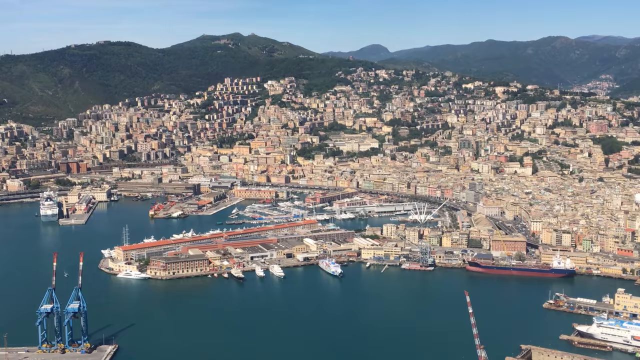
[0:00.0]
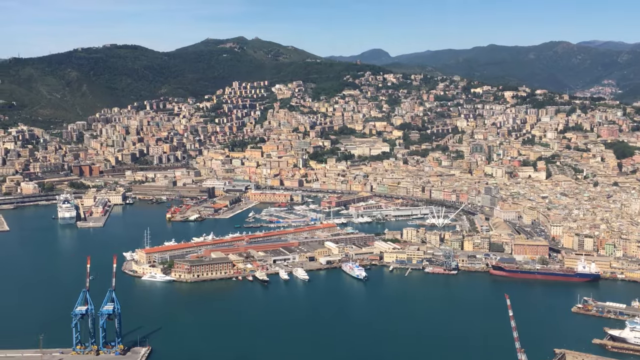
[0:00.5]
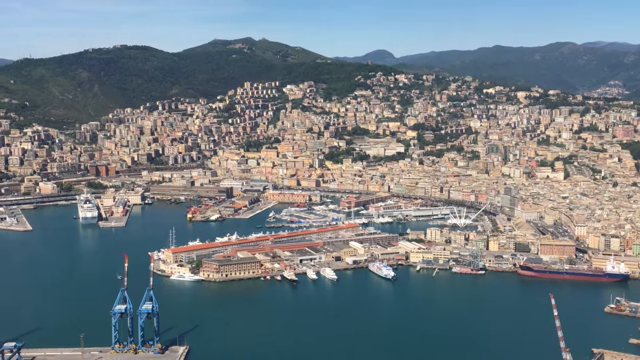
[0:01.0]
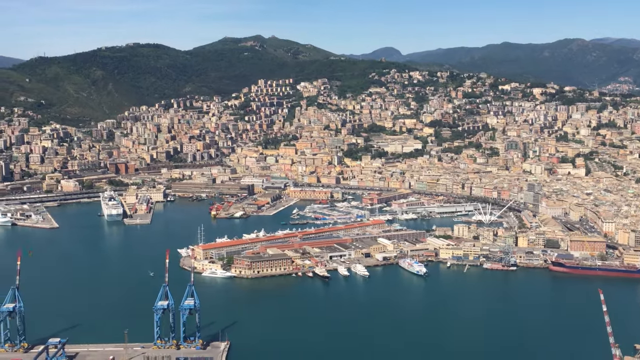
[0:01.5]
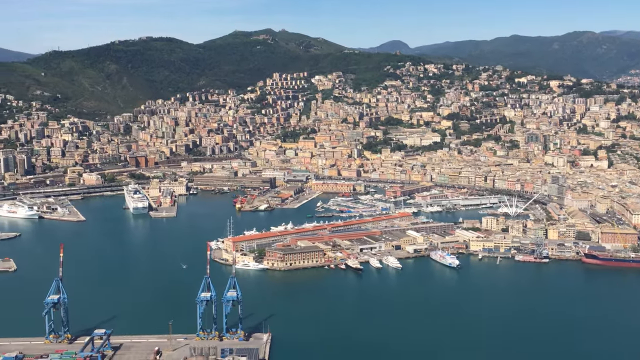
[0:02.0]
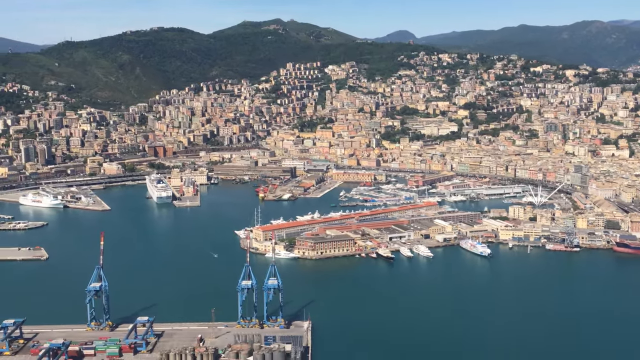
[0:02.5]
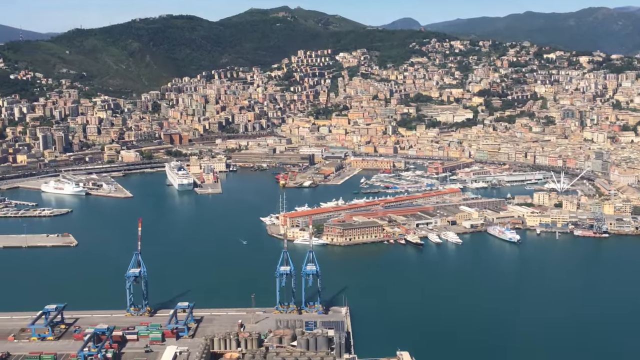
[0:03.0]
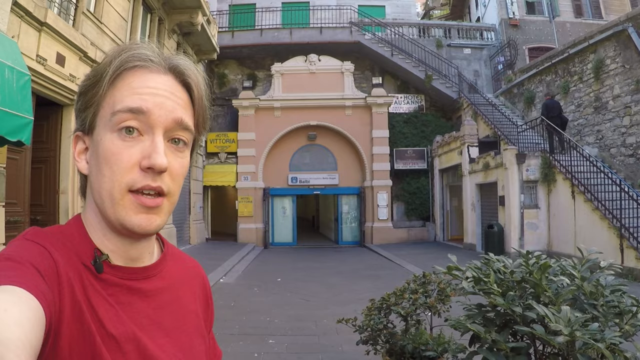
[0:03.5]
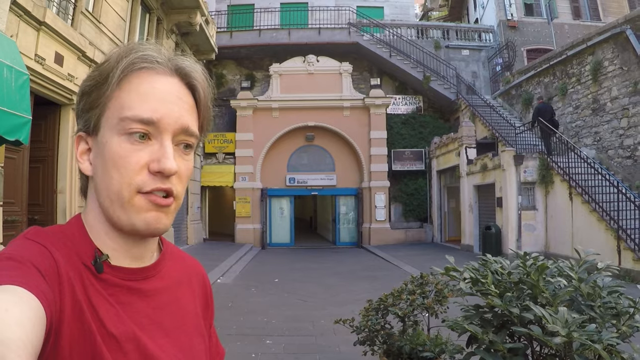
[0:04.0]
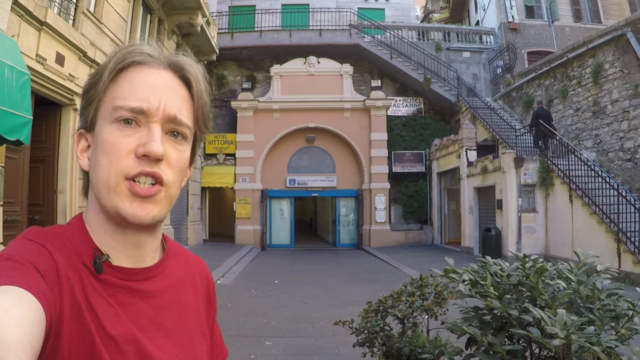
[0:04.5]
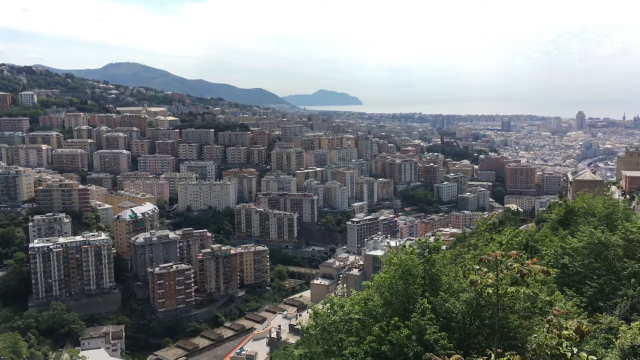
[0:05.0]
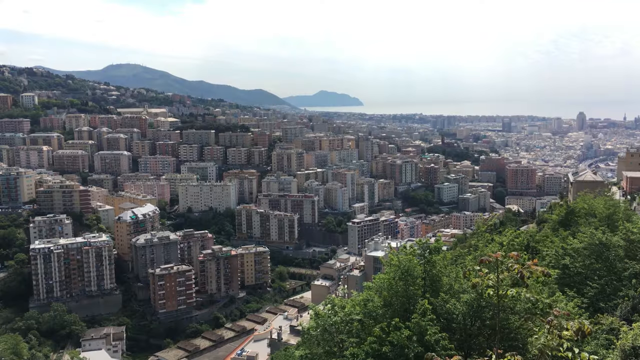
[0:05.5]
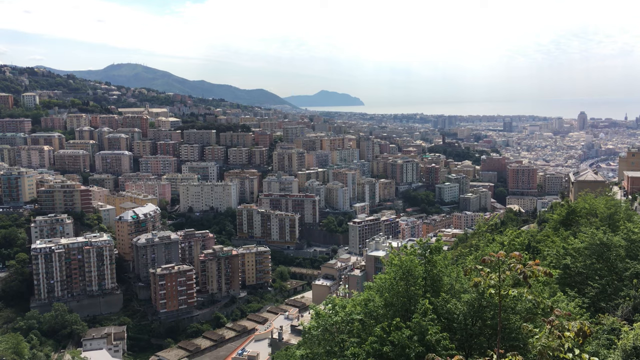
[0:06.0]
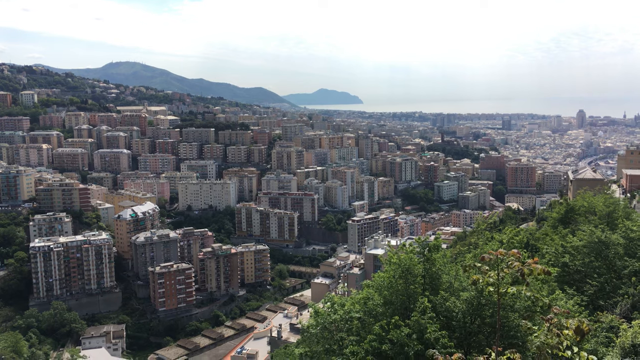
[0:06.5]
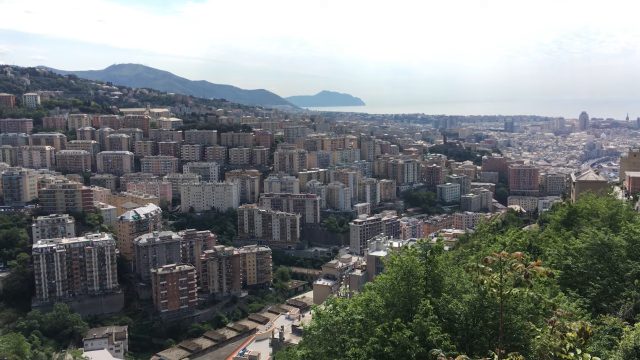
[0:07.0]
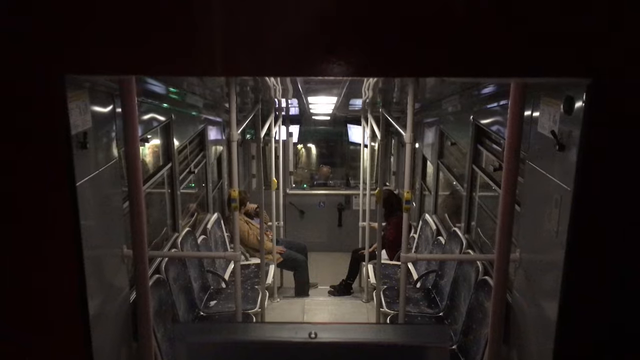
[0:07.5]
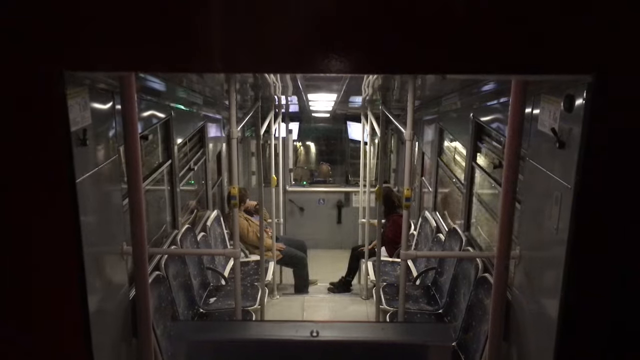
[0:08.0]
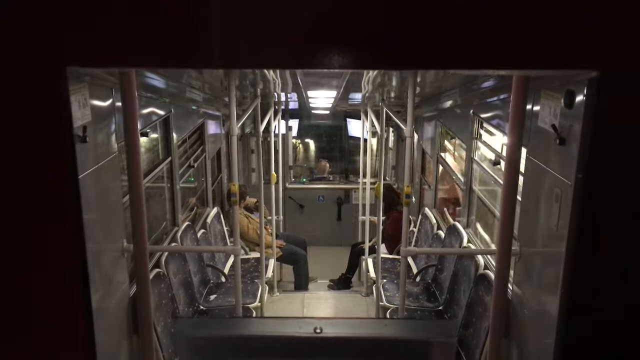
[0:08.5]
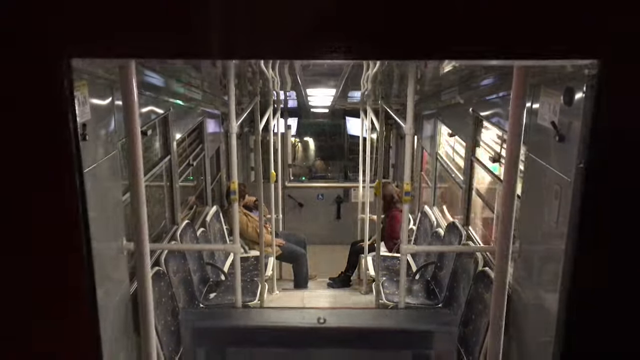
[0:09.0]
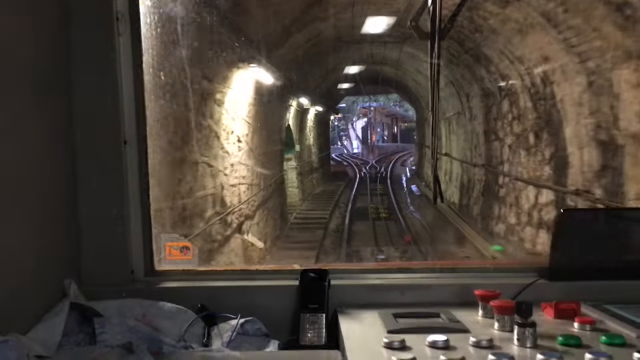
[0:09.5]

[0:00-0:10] An aerial shot shows what appears to be a waterfront town in Italy, with on-screen text reading "the strangest elevator in Italy." There are a bunch of docks, the waterfront, homes, some industrial things, and mountains in the backdrop, with blue water that is not especially clear. Next, a blonde white man in a red shirt holds a cell phone or camera up, kind of selfie style, and talks to it. He is on some type of street with steps going up and bricks around him, on the sidewalk in between, with maybe a door or a tunnel ahead. The next shot shows hills with a bunch of apartments and homes on them. Then the view is inside some type of shaft, kind of going down, with two people in the shaft machine. After that comes a tunnel that goes straight, almost like a subway station, though it is apparently an elevator.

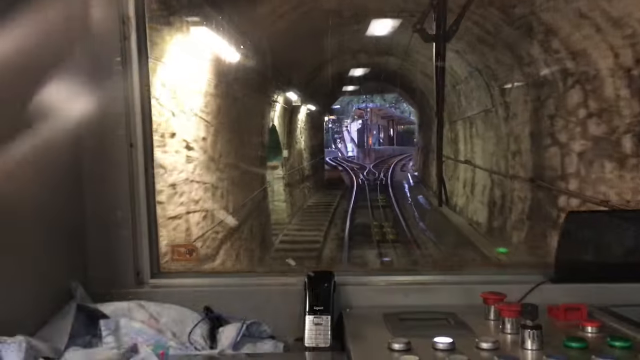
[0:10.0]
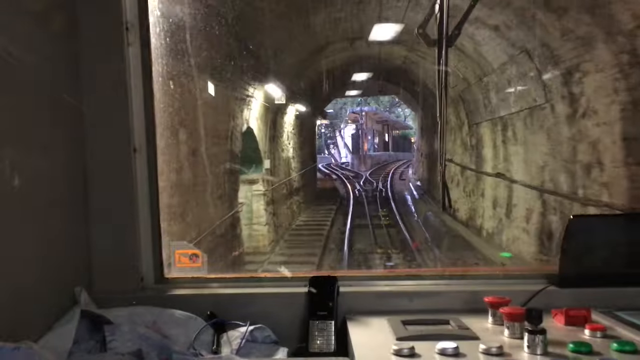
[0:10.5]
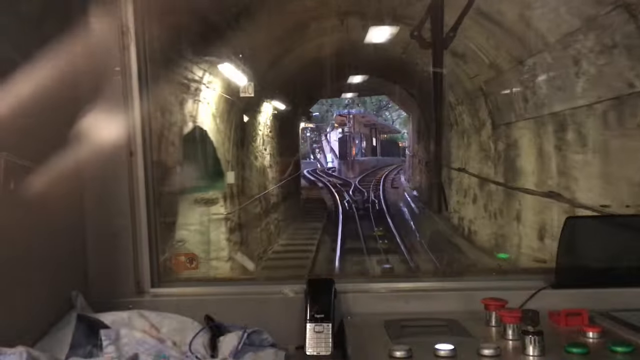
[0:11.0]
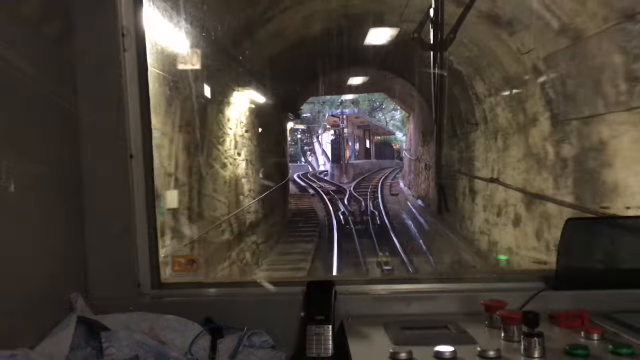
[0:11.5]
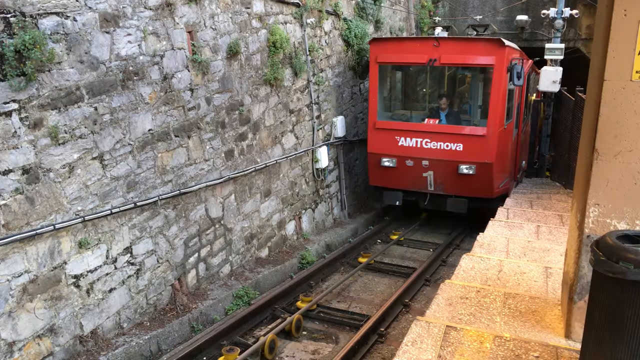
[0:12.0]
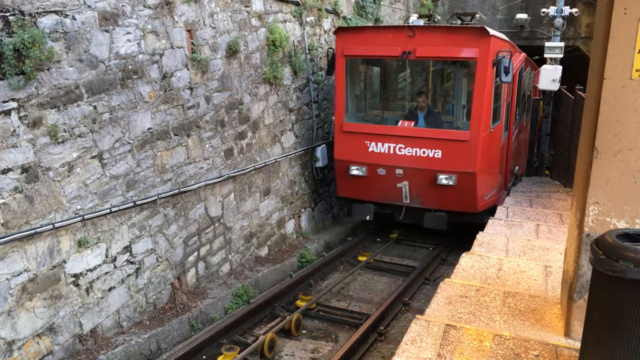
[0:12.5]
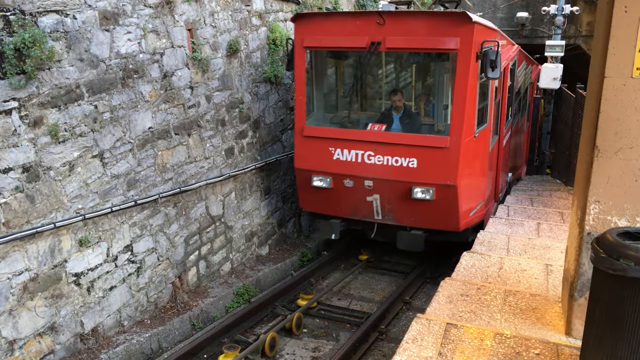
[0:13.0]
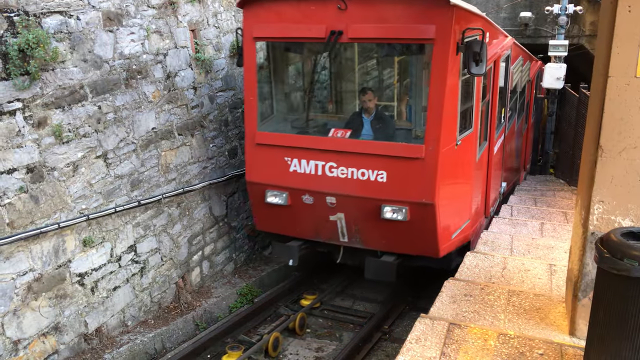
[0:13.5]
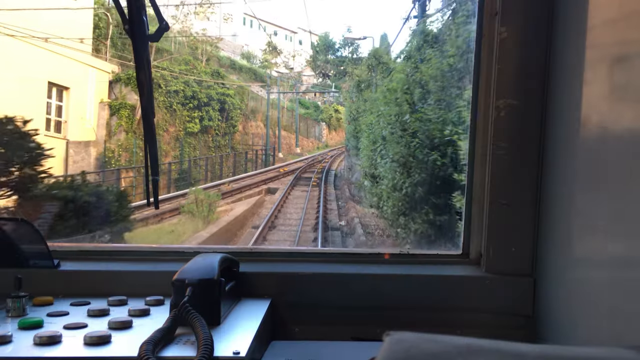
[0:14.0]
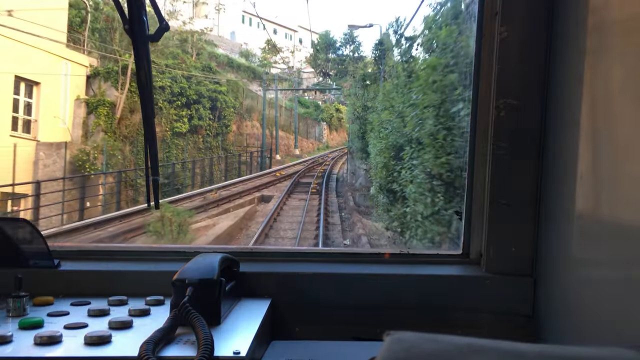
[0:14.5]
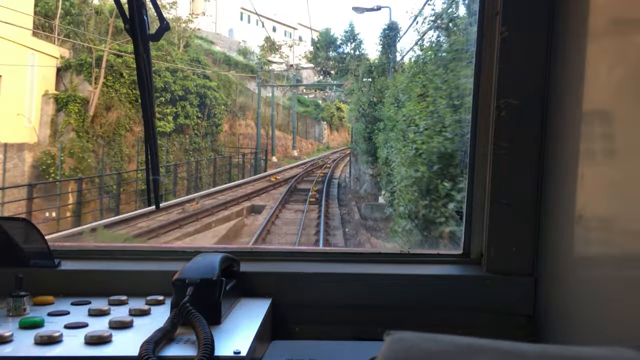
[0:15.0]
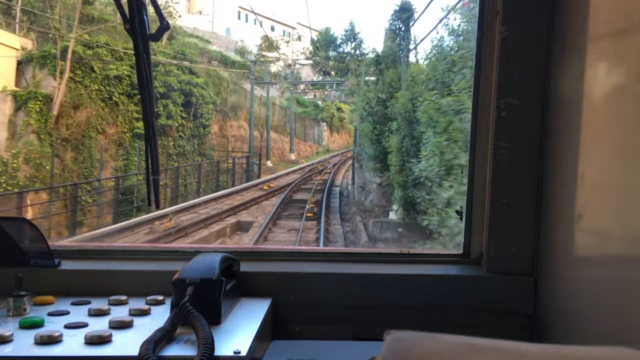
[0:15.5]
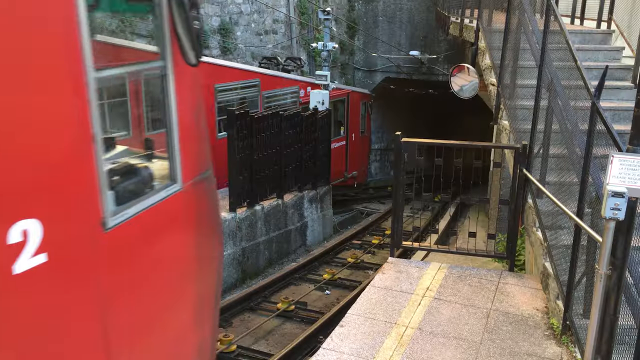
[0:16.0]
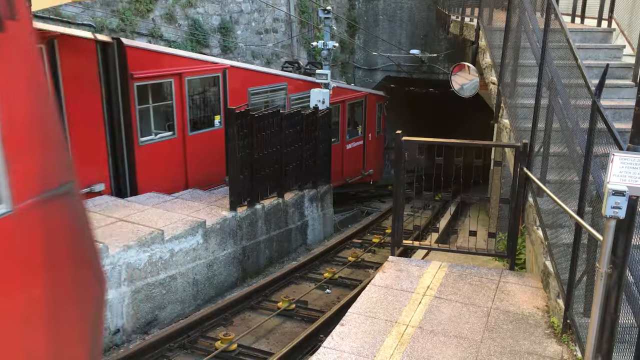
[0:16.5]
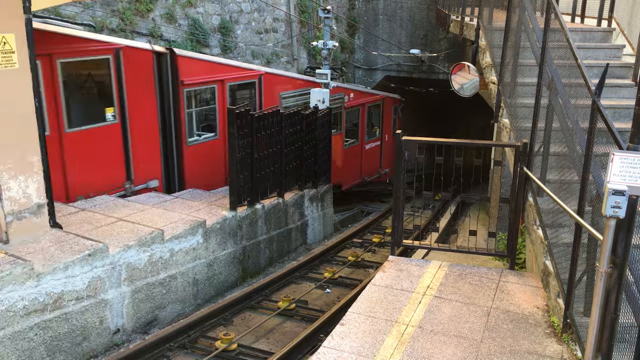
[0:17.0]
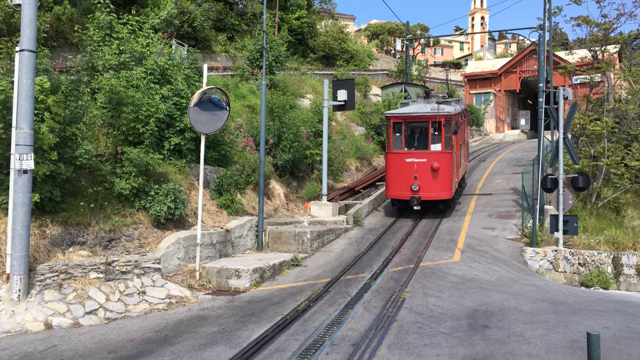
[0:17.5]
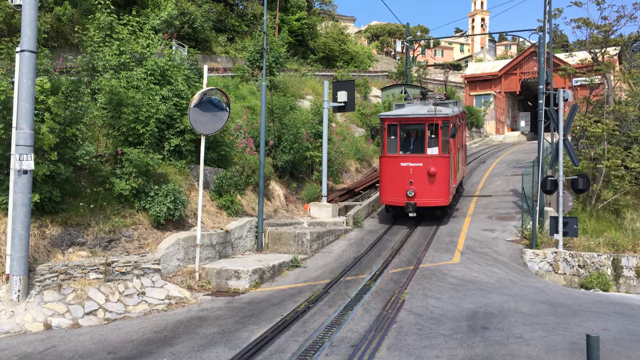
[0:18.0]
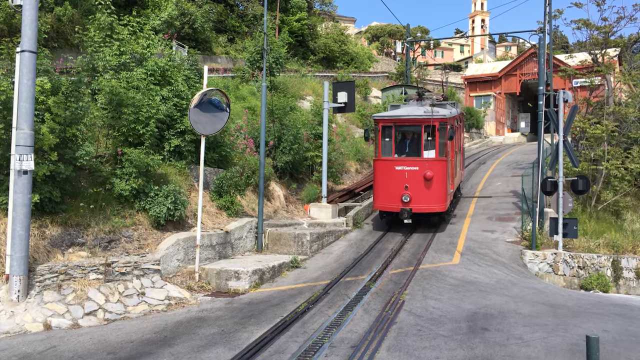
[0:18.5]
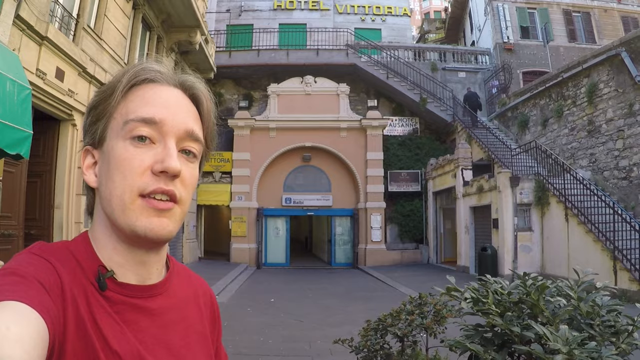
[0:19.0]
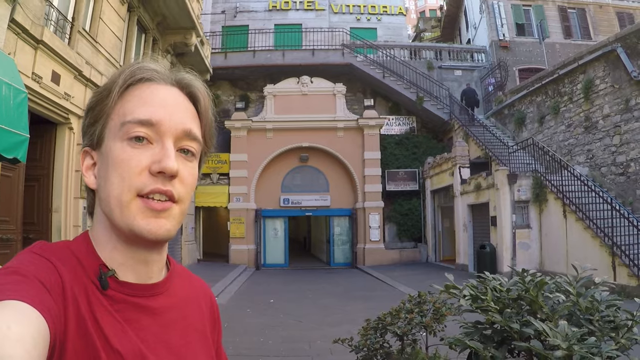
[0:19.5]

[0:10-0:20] A red vehicle that kind of looks like a train, maybe a trolley, moves along a track. There are two ways it can go; it comes up to something like a sidewalk where people apparently could depart, and then continues up the hill. There are bricks all around and foliage, and another one passes on the other side. The red vehicle then comes out onto a street and turns into something like a trolley car on a literal street. The name "AMT Genova" appears in white letters, and the vehicle has the number 2 on it. It seems to be going uphill. Controls are visible, and a man in a blue shirt sits right in the middle, driving the machine up the mountain.